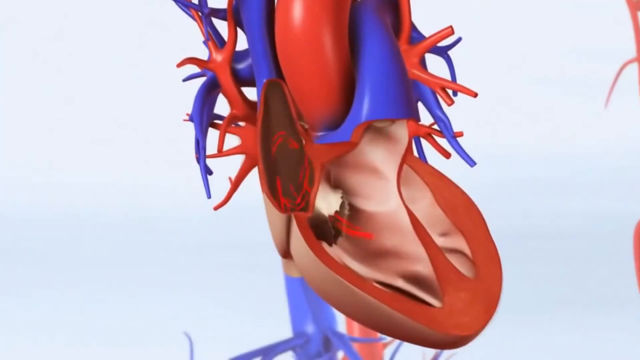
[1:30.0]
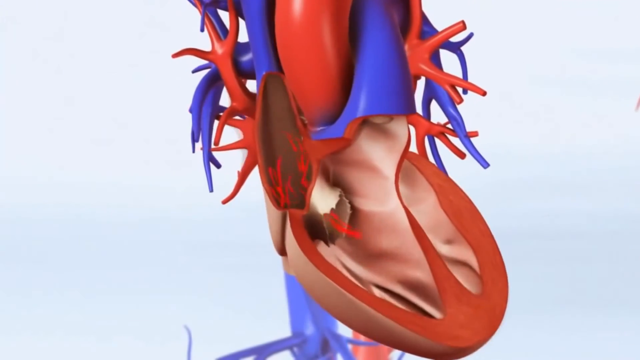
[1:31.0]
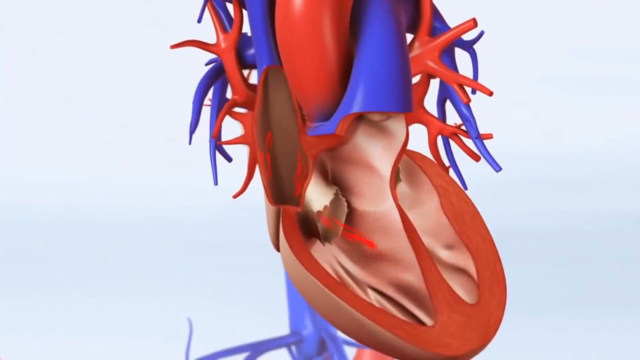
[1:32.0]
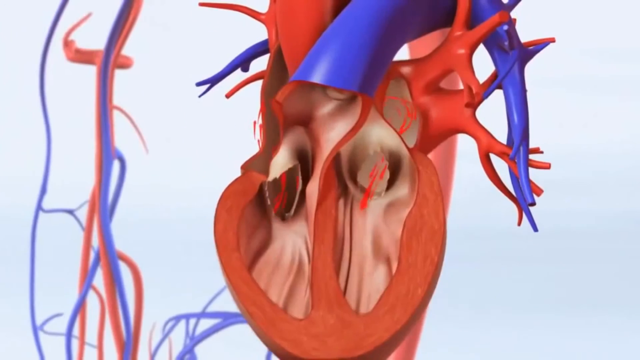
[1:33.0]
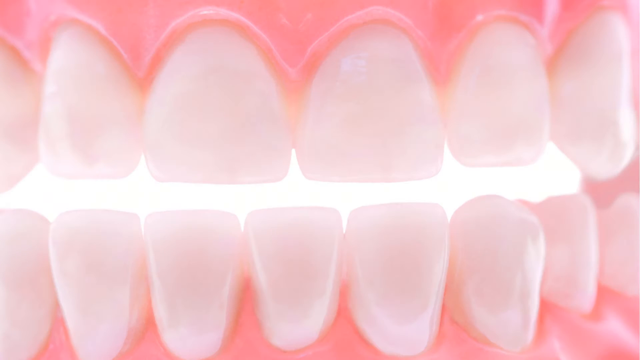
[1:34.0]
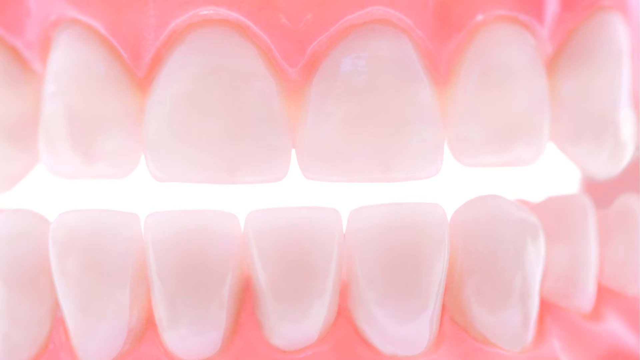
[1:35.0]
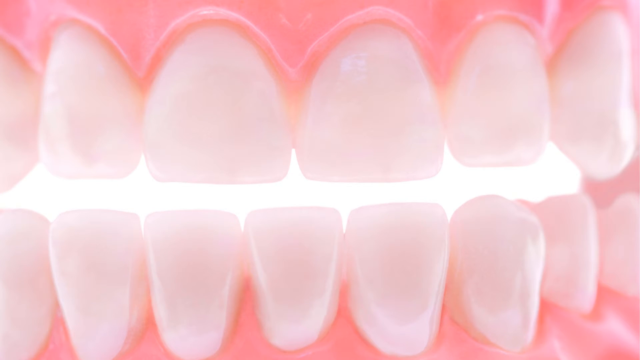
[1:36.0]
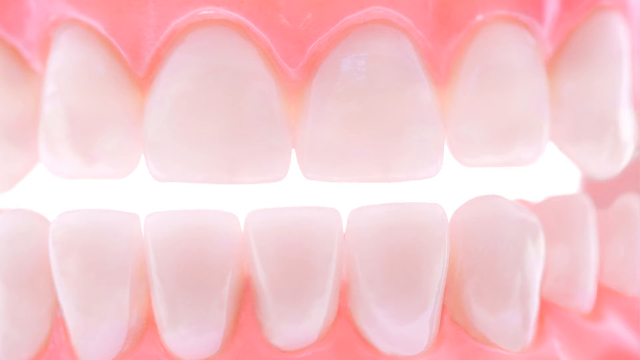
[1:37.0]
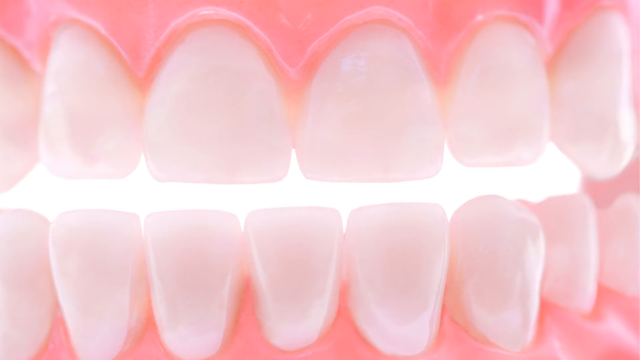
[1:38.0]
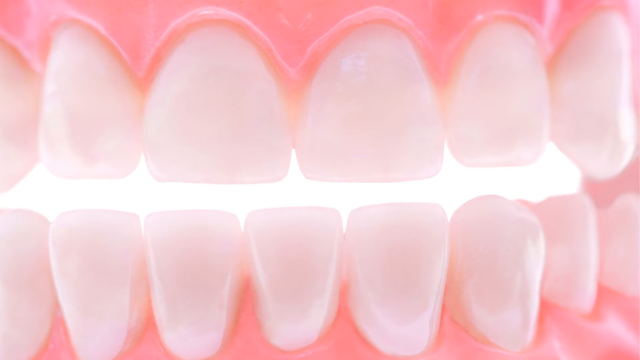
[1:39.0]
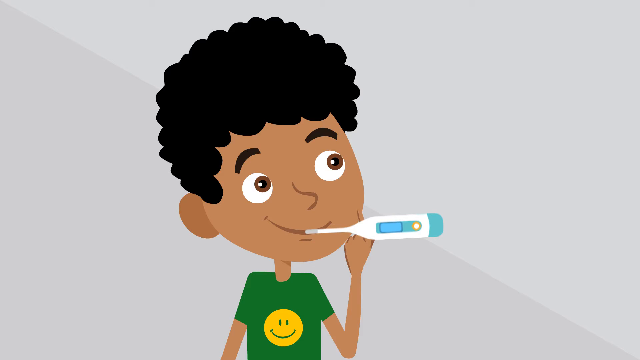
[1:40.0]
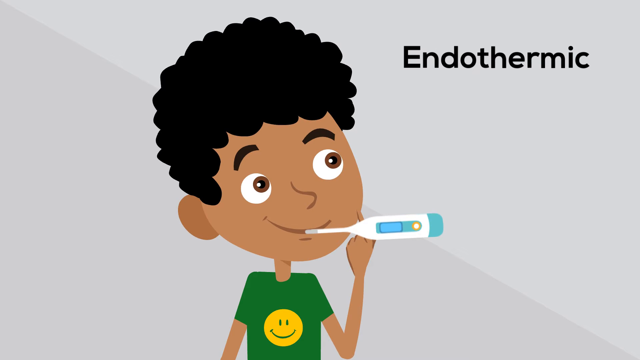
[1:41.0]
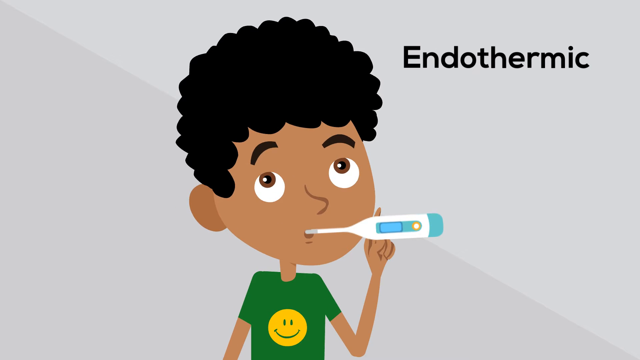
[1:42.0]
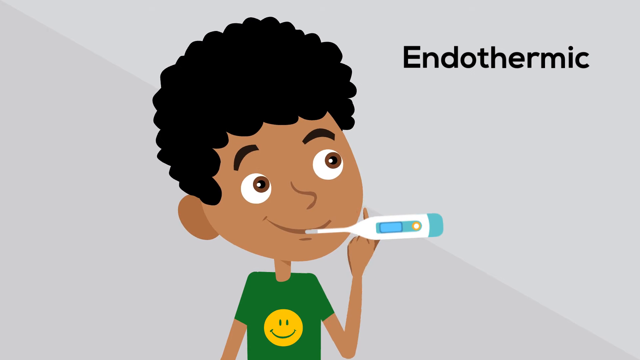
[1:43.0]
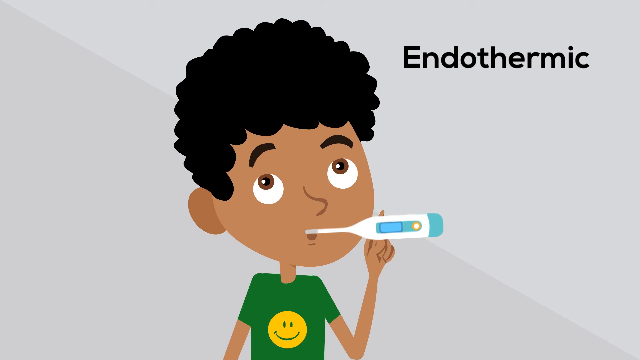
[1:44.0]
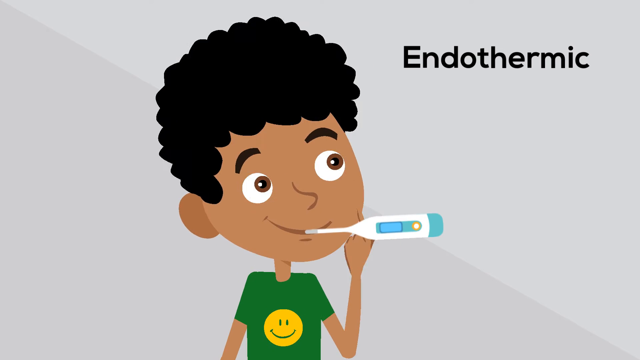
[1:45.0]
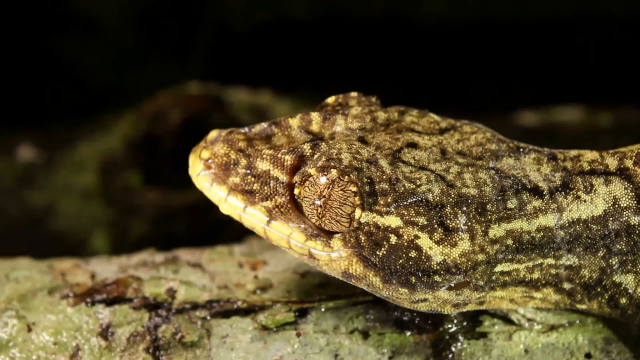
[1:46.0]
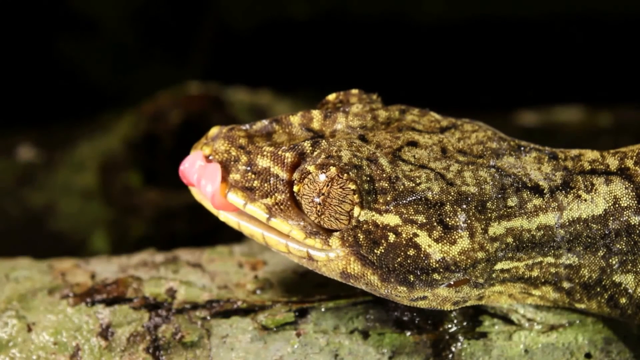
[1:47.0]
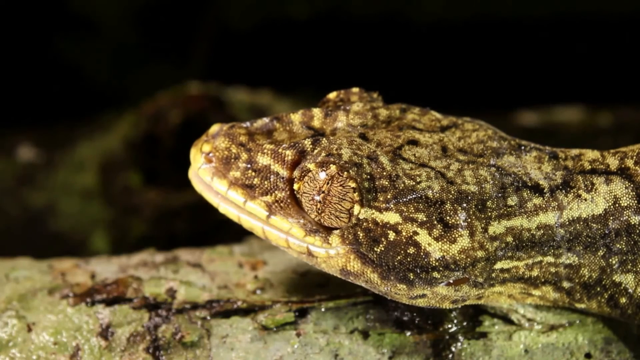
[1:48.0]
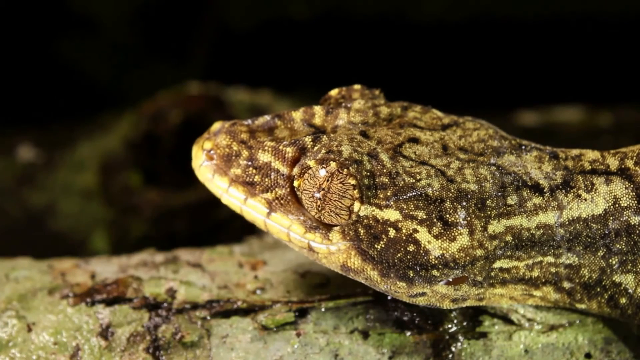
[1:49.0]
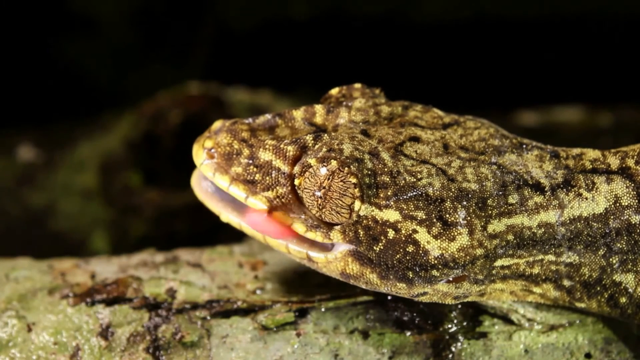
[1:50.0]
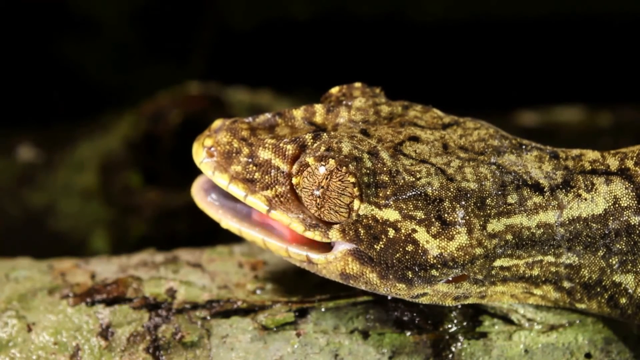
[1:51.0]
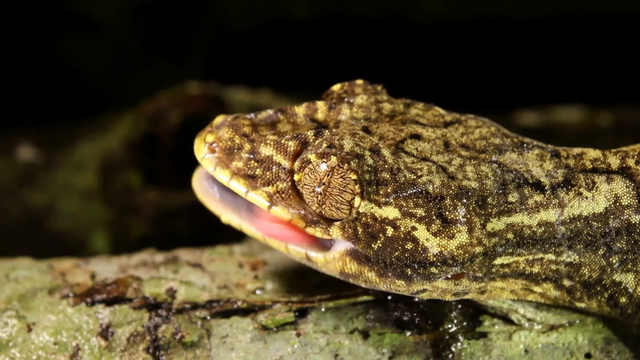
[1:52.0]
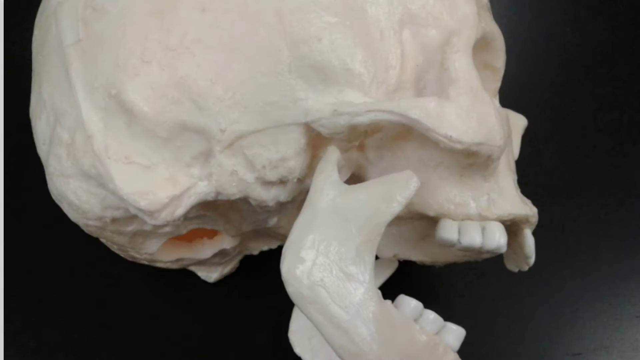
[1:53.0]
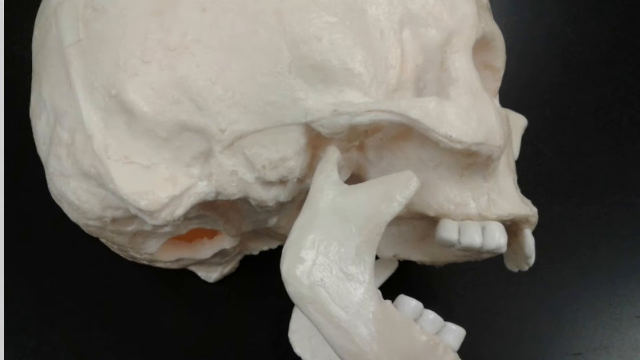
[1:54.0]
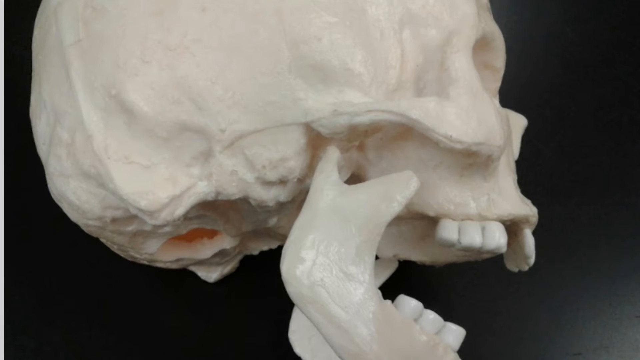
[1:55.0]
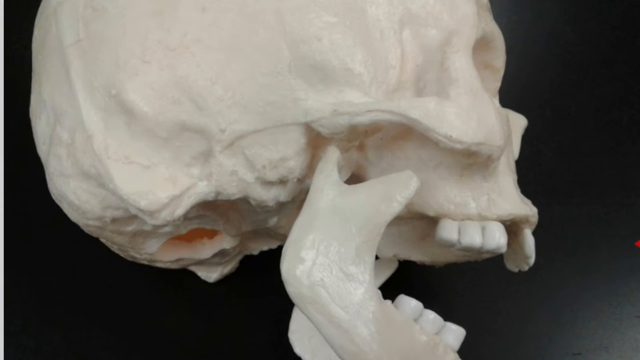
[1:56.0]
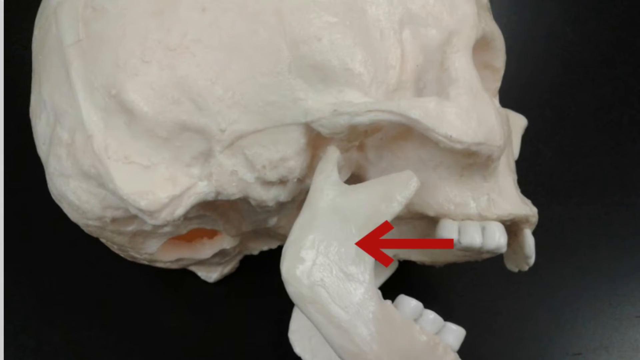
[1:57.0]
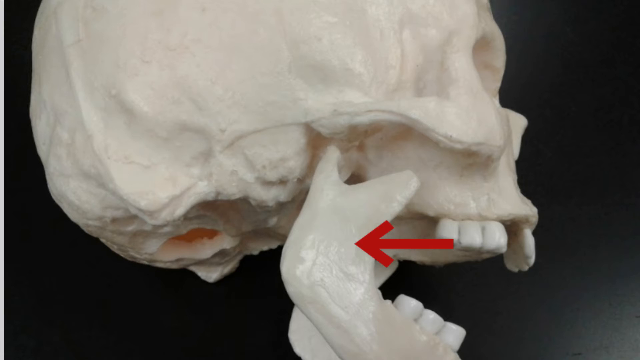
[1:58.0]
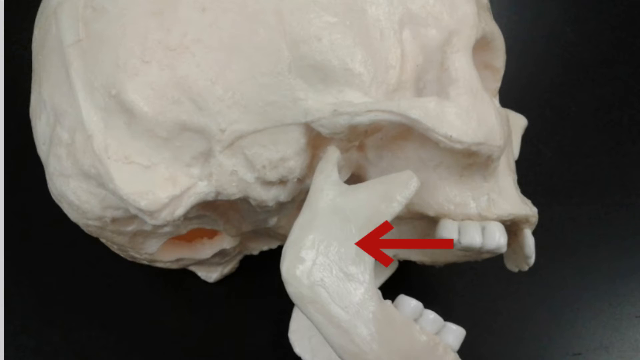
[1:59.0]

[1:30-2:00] The heart, red and blue, seems to pump blood from one side to the other; the colors apparently label its different parts. The mouth, teeth and gums are shown. A boy who looks black or brown takes his temperature; he wears a green t-shirt with a yellow smiley sticker on it and white sneakers. A brown chameleon in its natural habitat licks its left eye. A human skull with what seems to be a broken jaw is shown, marking the part that might be broken, where the jaw joins the top part of the skull, along with damage of some sort on the jaw.